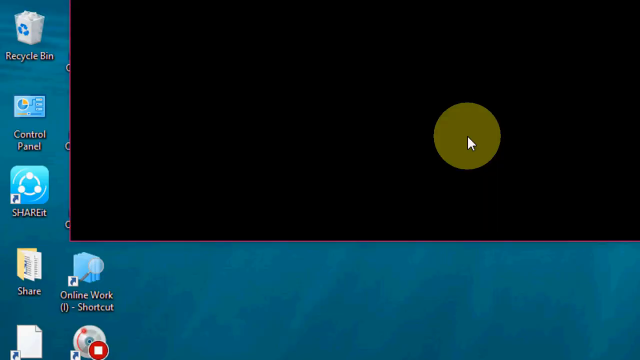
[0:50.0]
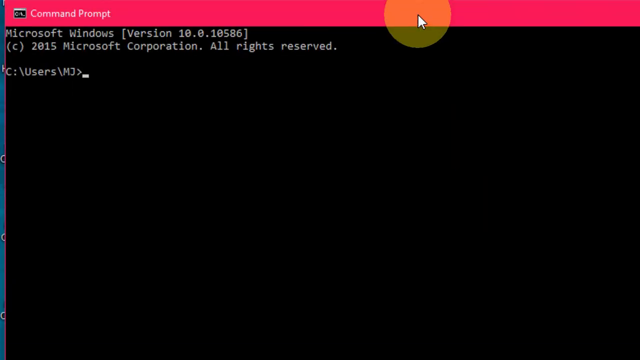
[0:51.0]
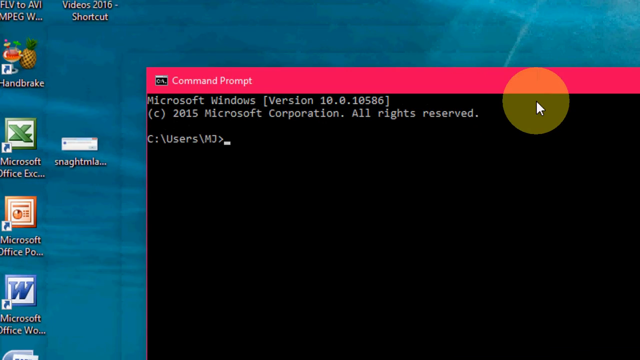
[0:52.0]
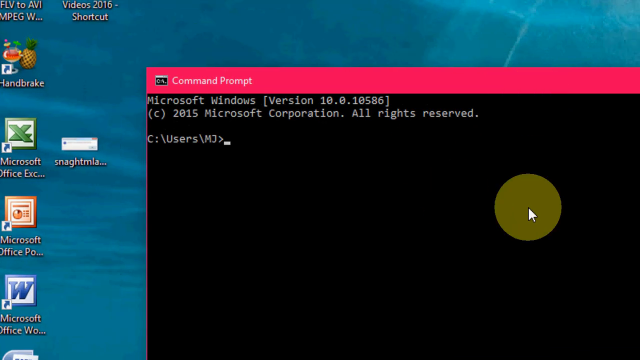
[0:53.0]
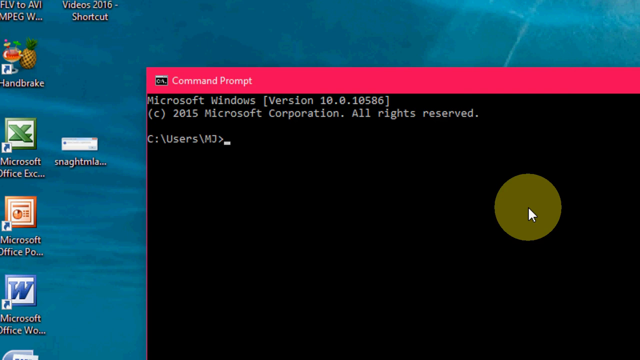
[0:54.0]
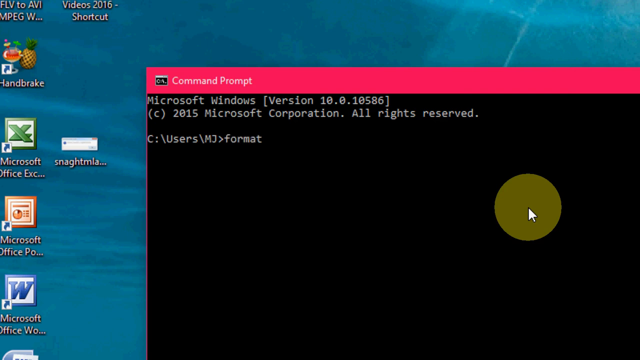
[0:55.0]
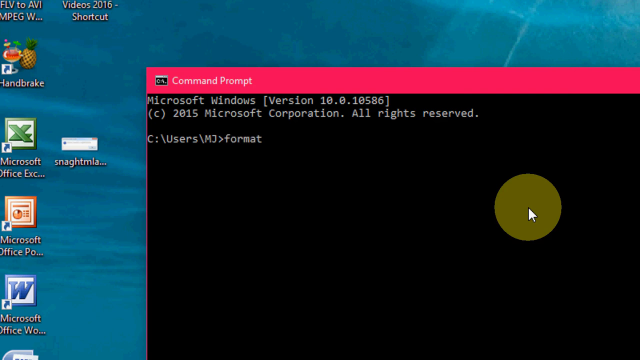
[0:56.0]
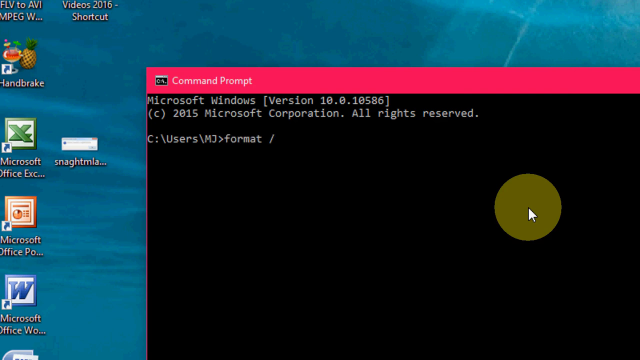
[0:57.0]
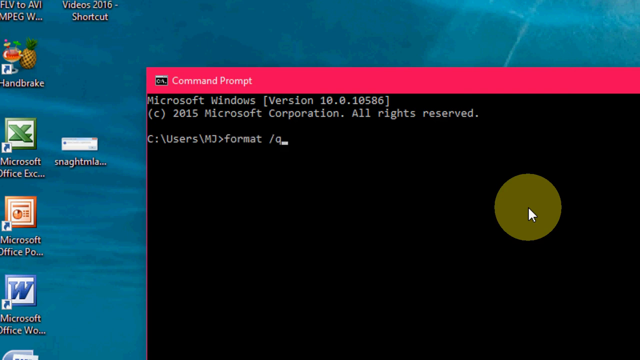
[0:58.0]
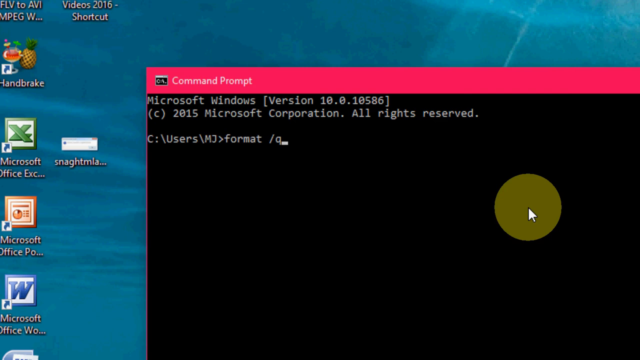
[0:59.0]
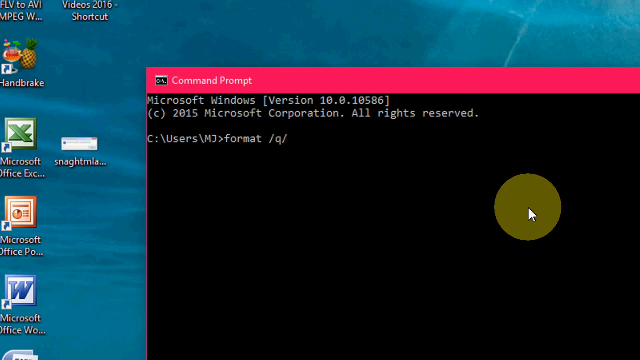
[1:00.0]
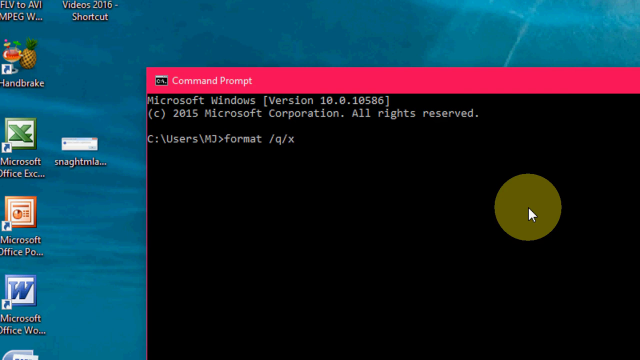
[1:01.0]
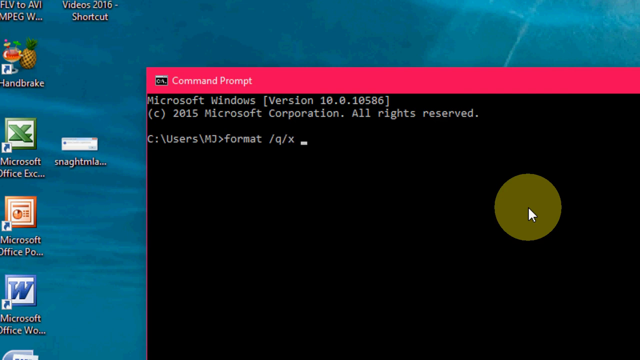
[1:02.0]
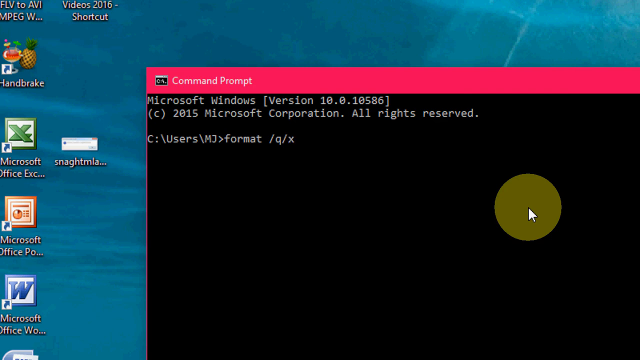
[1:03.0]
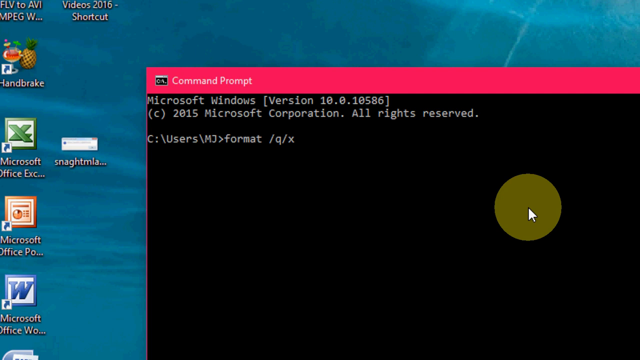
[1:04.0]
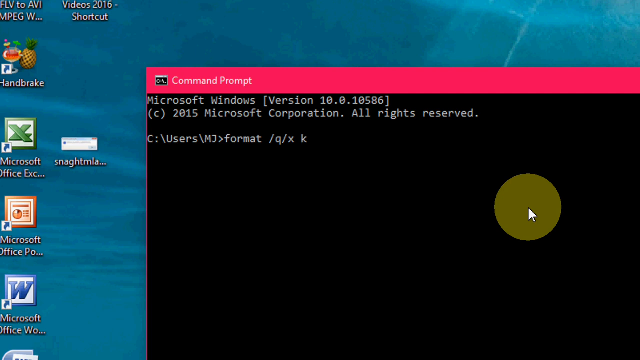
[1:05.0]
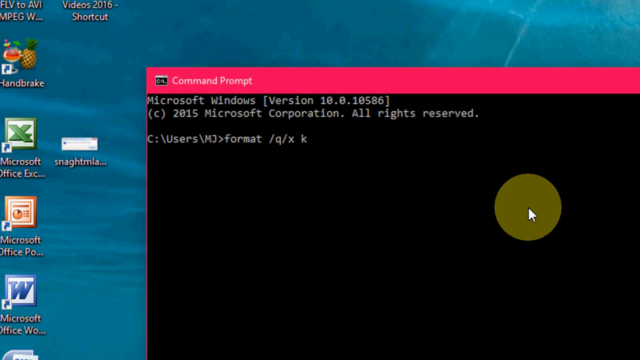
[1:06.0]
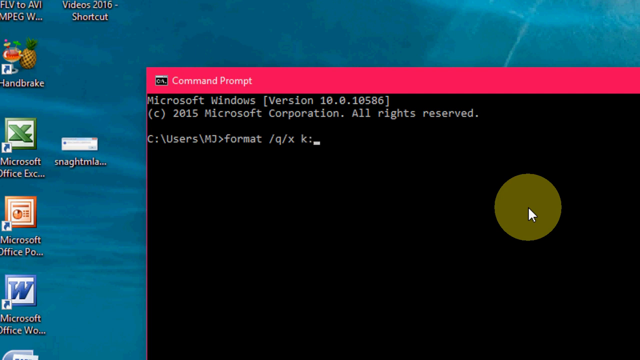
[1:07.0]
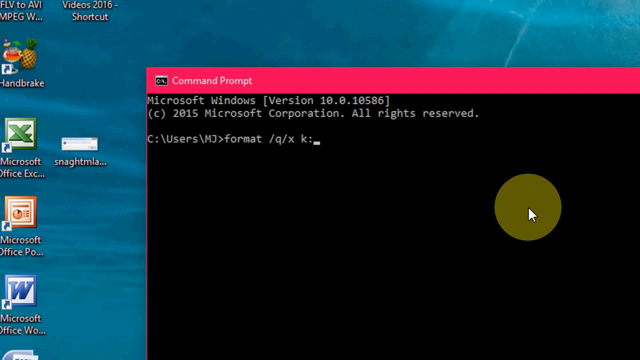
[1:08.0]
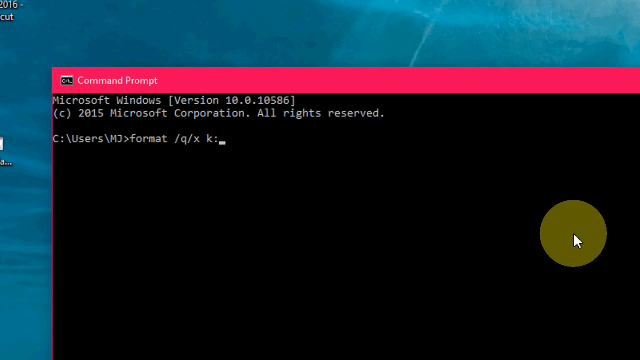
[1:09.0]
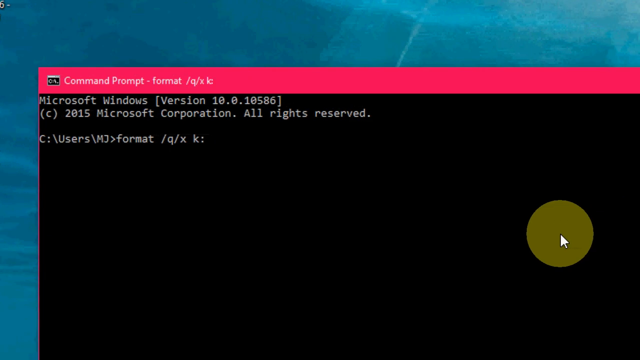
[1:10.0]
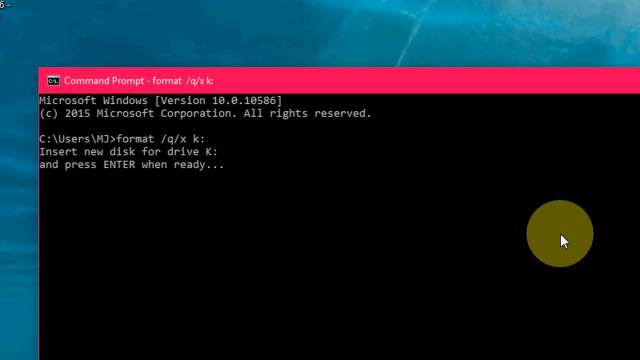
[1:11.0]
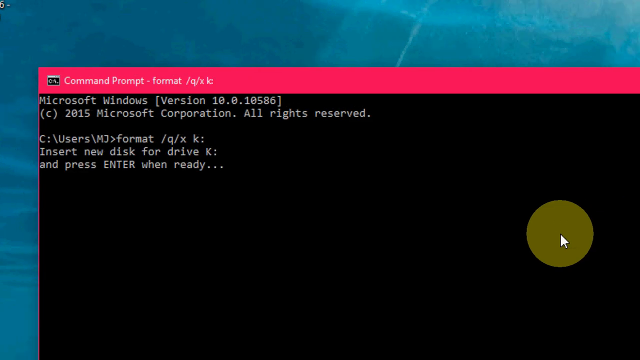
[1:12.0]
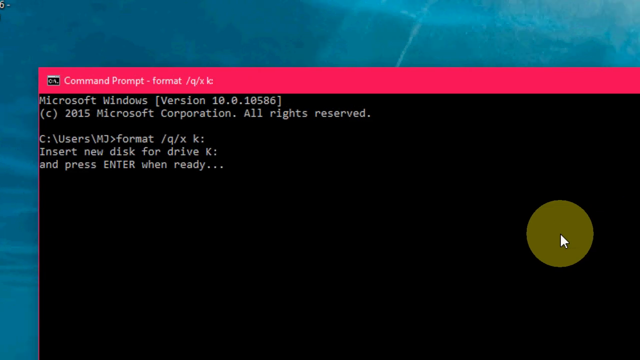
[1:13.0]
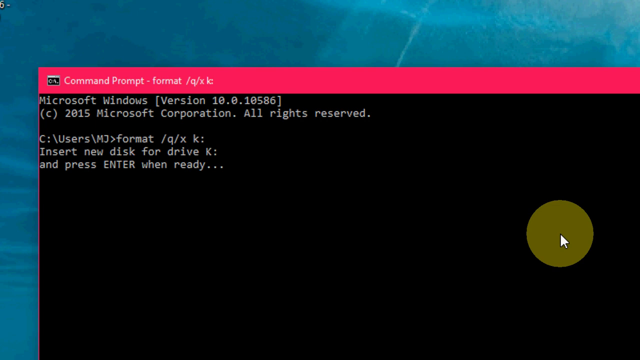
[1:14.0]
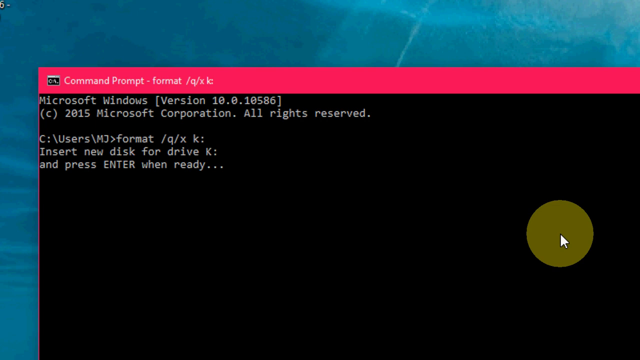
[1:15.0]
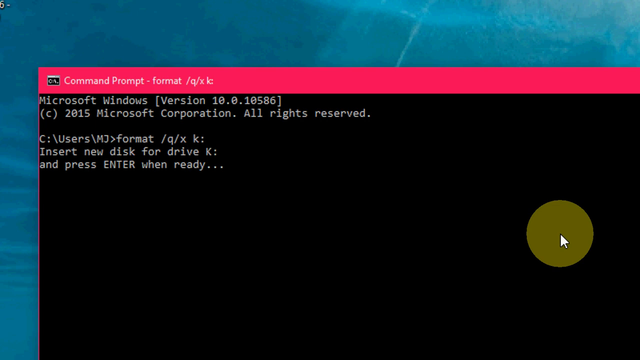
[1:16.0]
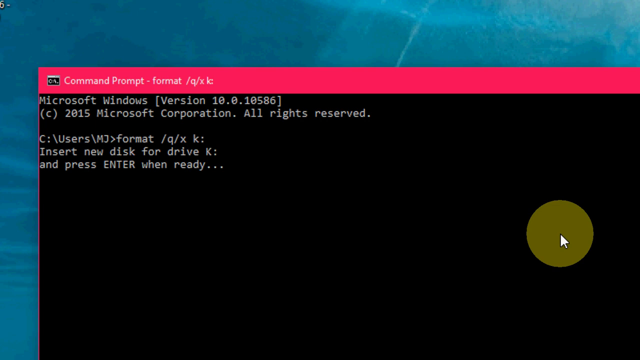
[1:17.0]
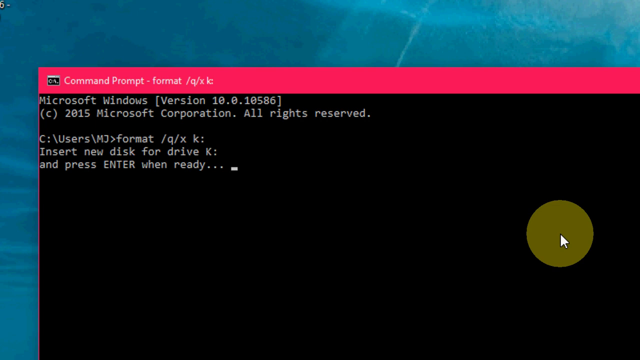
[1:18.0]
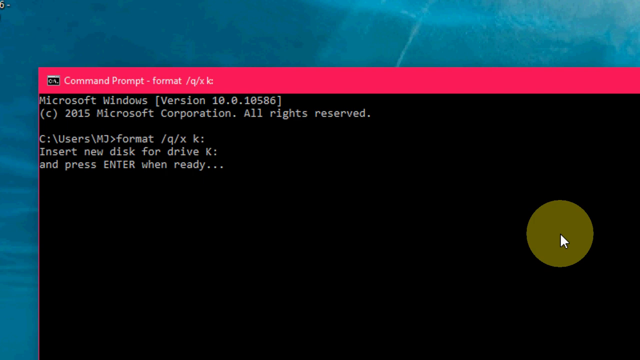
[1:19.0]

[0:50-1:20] The Command Prompt window opens. Text at the top shows the Microsoft Windows version and "2015 Microsoft Corporation all rights reserved", and the first line shows a C drive users MJ path. To the left of the window are desktop applications including a "Videos 2016" shortcut, Microsoft Office Excel, Microsoft Office PowerPoint, Microsoft Office Word and Handbrake. The person types /q /x, then the letter K and a colon, and presses Enter; the window says "insert new disk for drive K and press enter when ready...". The background remains the same behind the Command Prompt window: blue and light blue water with the person swimming across shallow light blue water, seen from below looking up so that their belly and legs are visible.